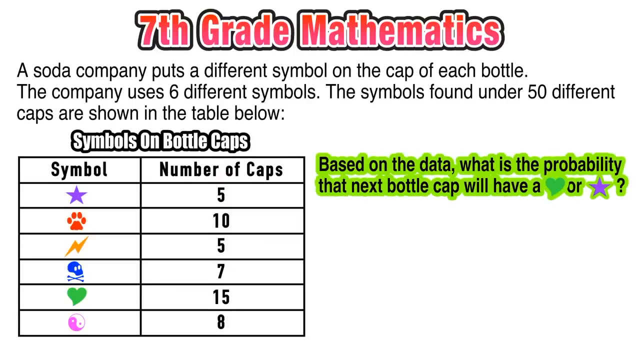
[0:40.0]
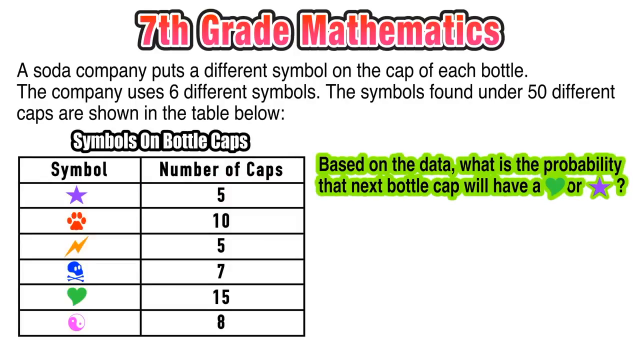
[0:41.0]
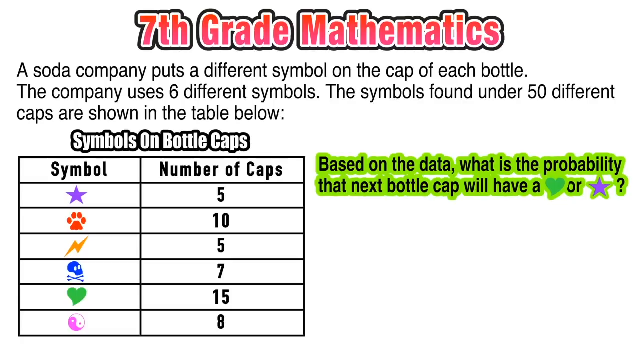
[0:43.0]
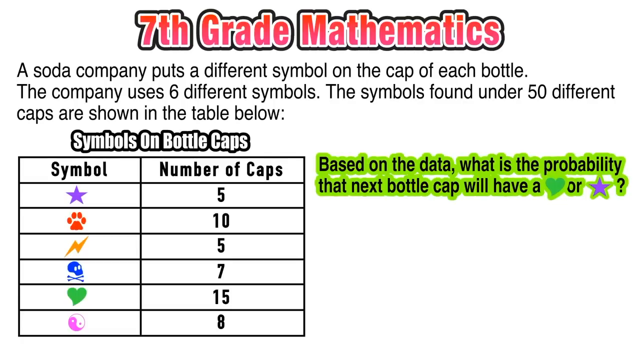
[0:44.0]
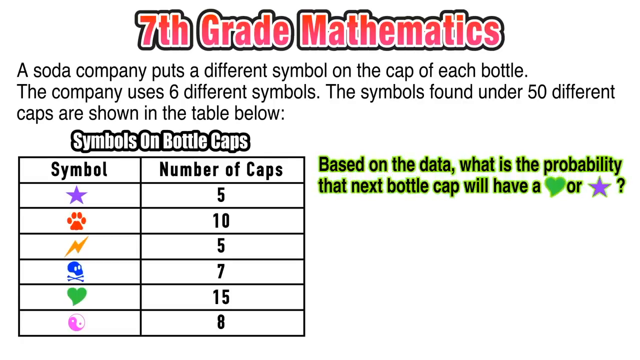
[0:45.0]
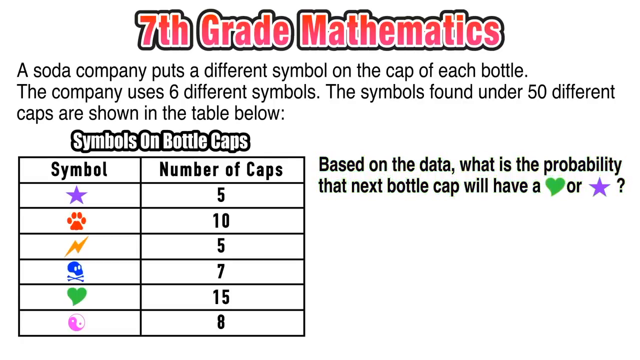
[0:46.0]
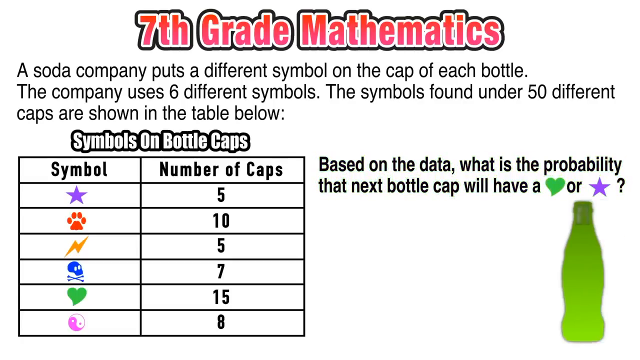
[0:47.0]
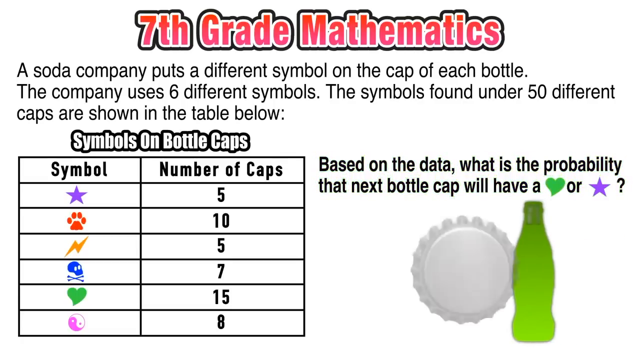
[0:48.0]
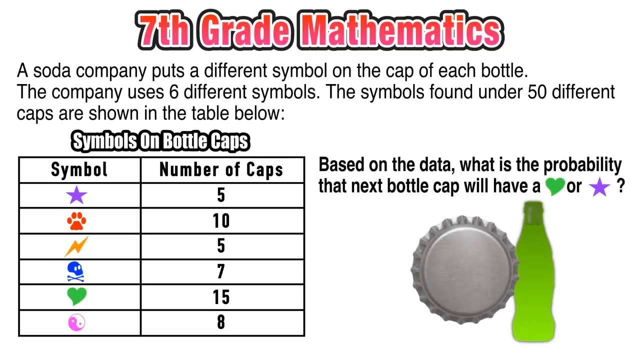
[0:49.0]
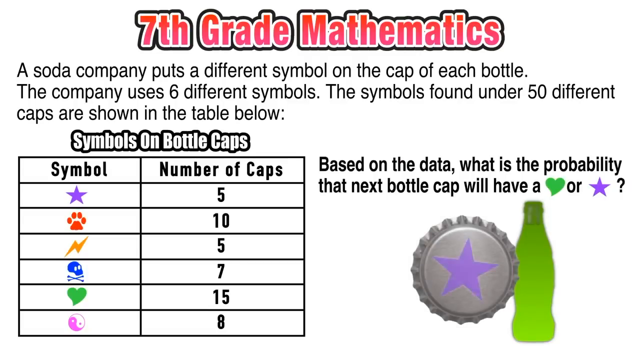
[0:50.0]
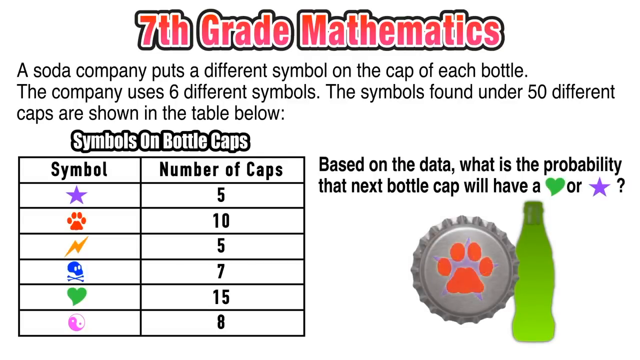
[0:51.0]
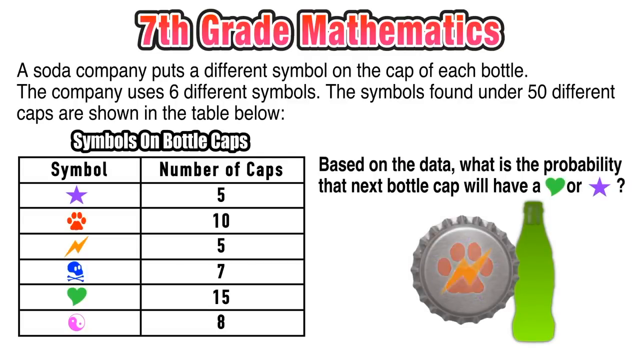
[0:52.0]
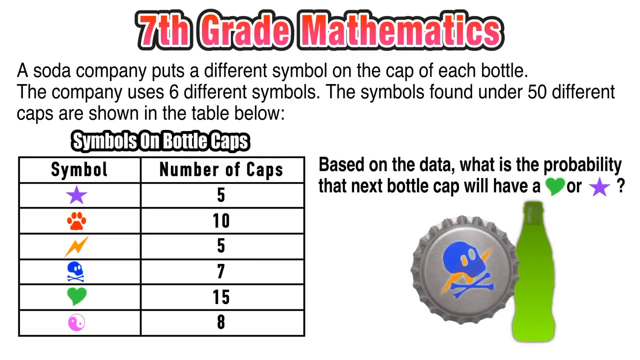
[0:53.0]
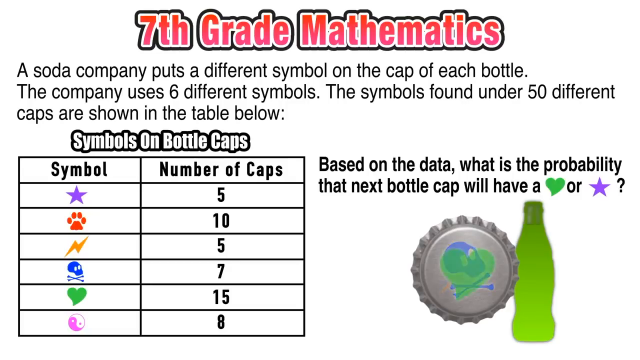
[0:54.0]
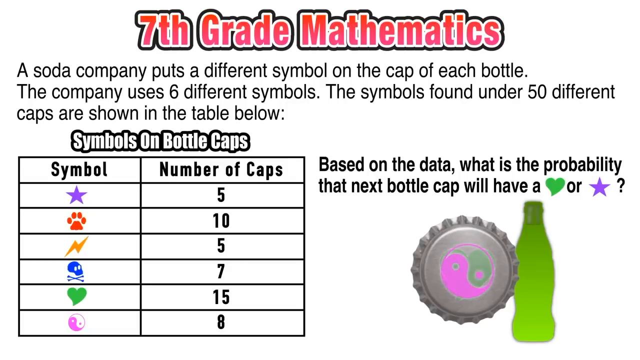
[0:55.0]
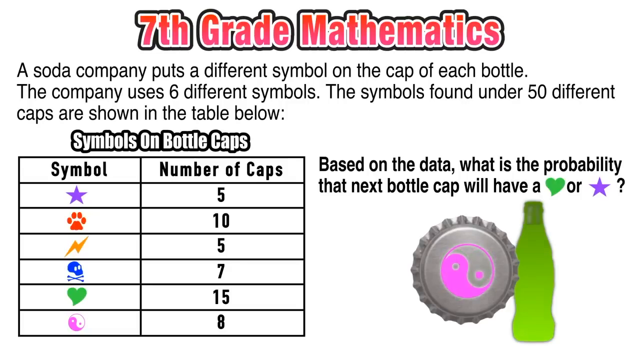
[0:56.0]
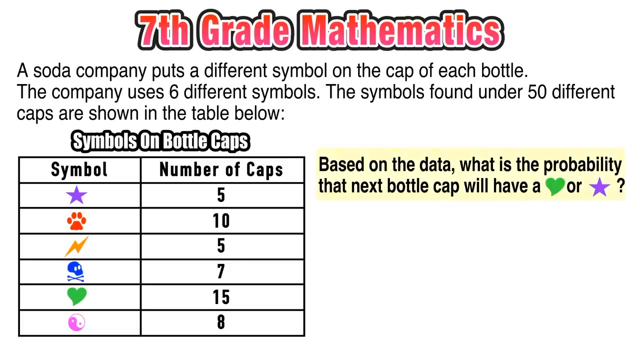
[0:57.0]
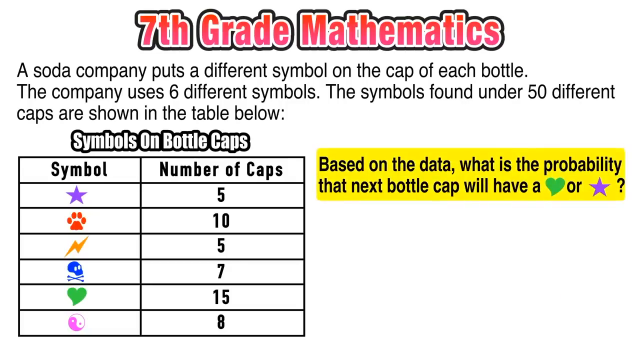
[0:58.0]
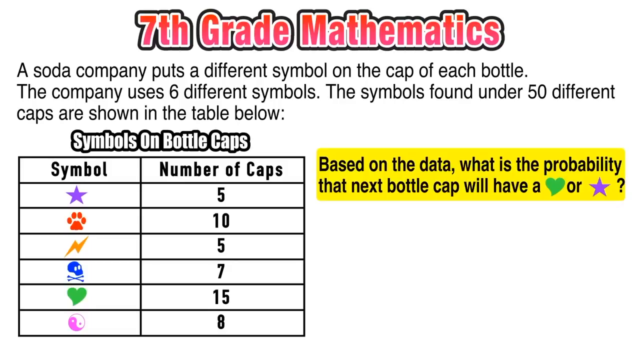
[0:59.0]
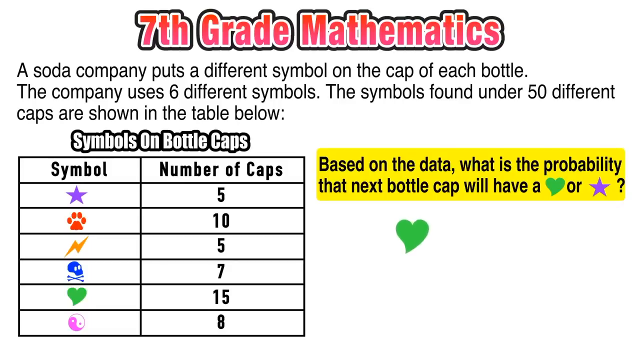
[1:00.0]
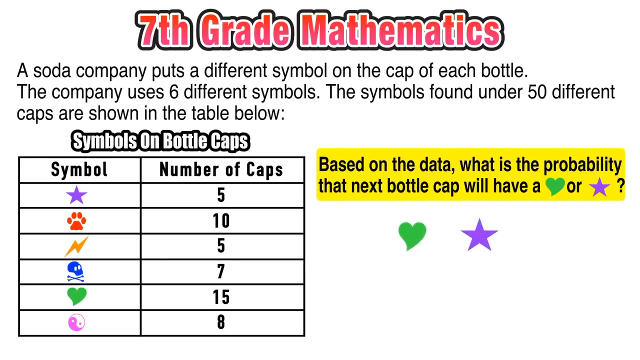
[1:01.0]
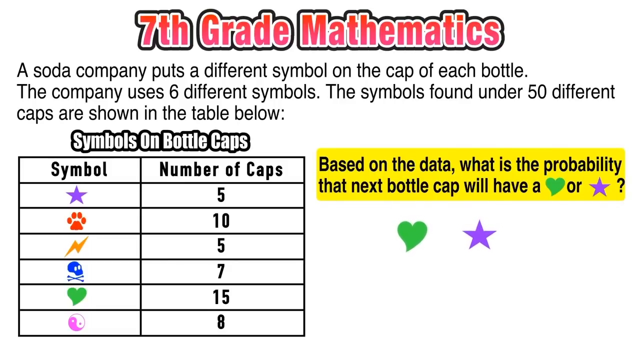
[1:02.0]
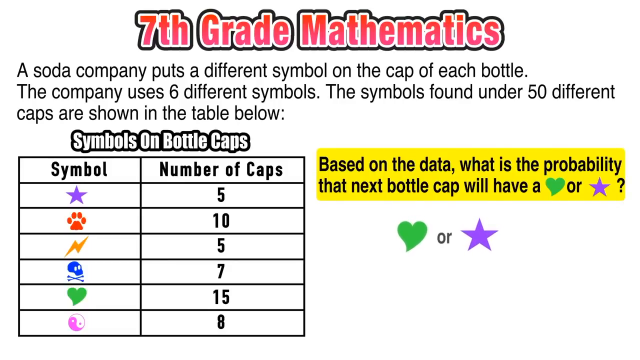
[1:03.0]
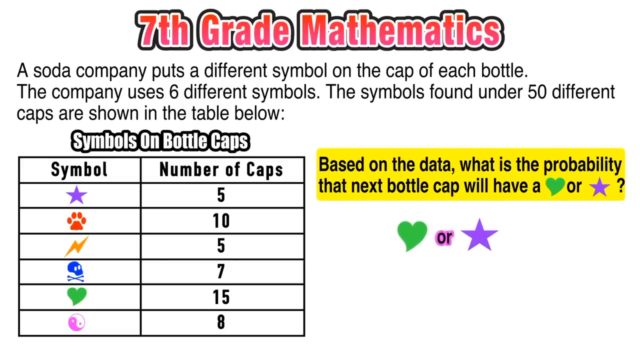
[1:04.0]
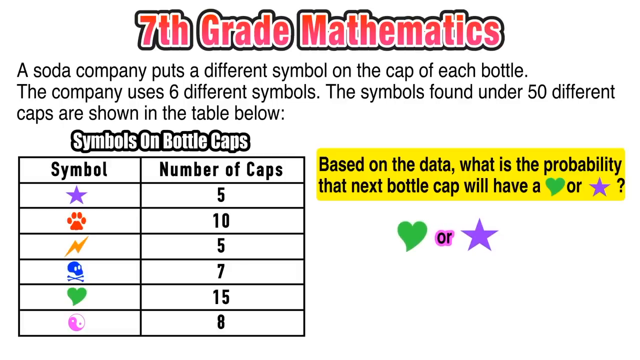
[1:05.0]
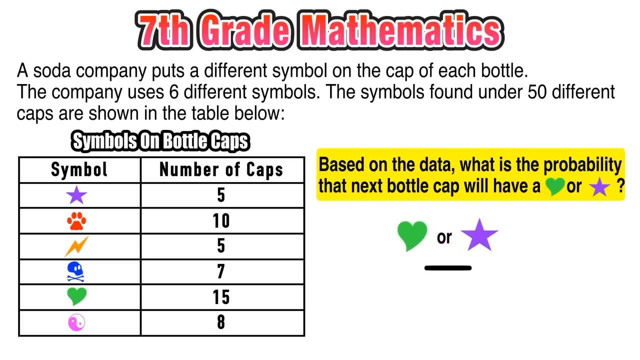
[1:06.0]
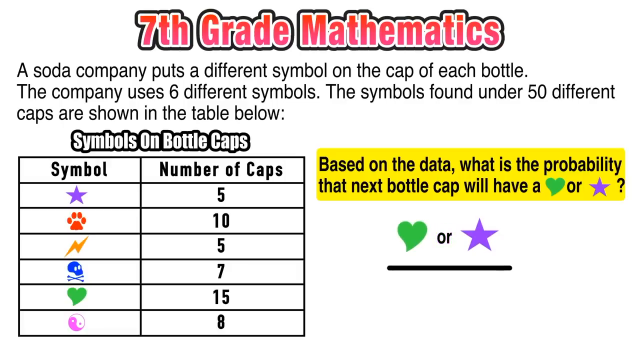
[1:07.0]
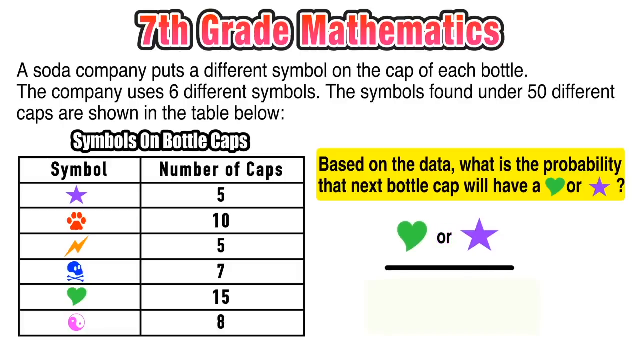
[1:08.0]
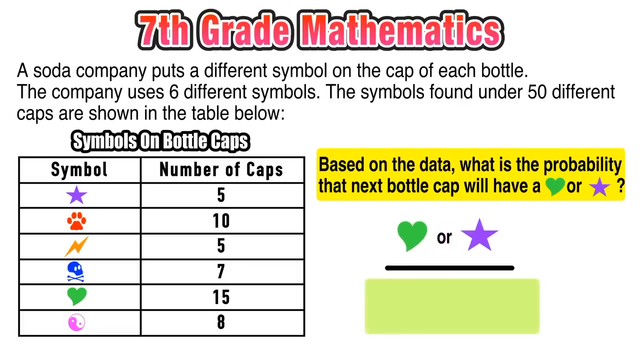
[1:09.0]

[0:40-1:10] A green bottle comes from the right side toward the center, followed by a cap. Different symbols change colors, and a heart and a star are shown, the star in purple and the heart in green. At the bottom, the several different symbols said to be on the different caps are shown again. The background is grey, and on the right side there are words written in black and highlighted in green. The symbol diagram is on the left side, and there are also words written in black at the top. "7th grade mathematics" is shown at the top of the screen in bold red letters. The heart is shaded green and the star purple. There is also a blue skeleton symbol, a yellow symbol that appears to be a lightning bolt, and a red footprint.